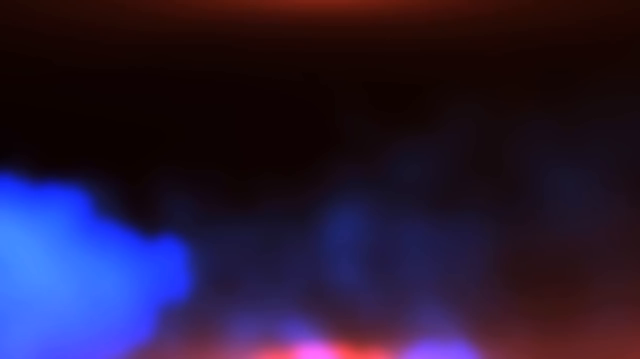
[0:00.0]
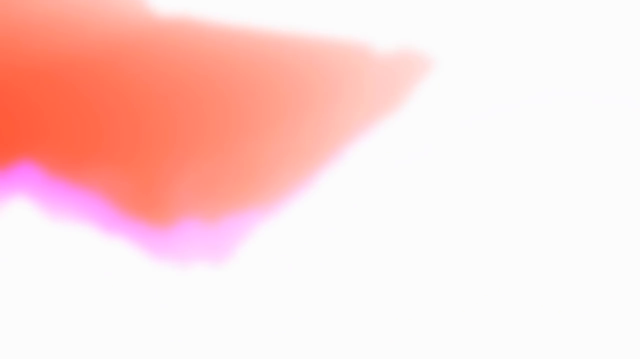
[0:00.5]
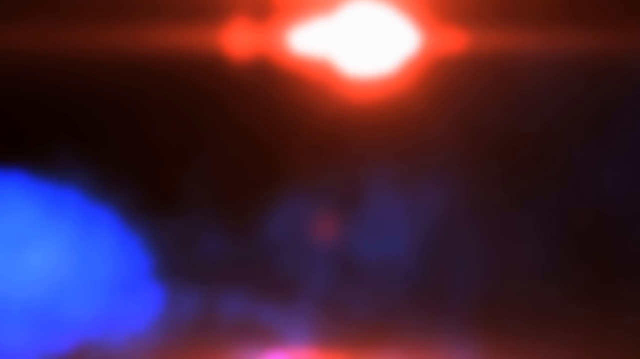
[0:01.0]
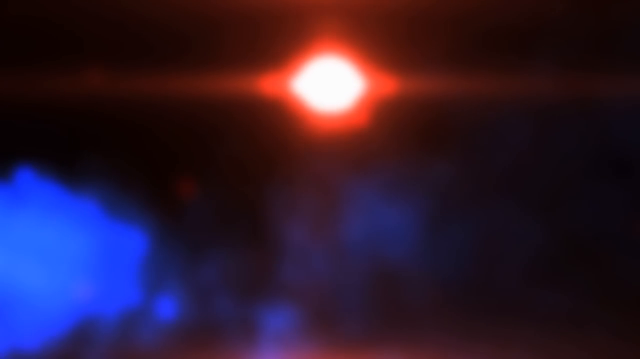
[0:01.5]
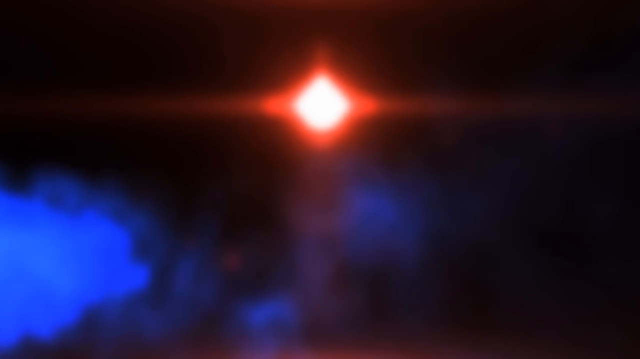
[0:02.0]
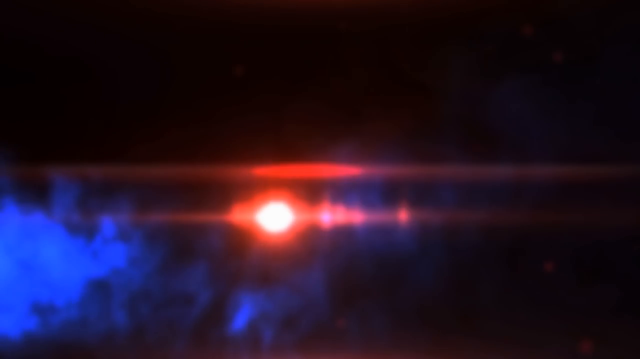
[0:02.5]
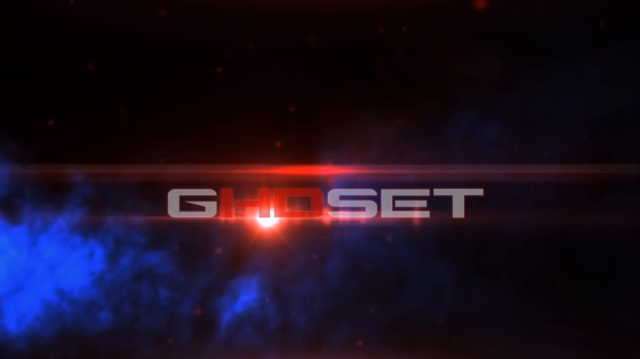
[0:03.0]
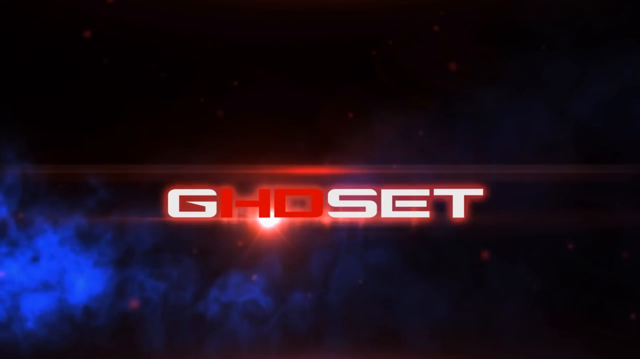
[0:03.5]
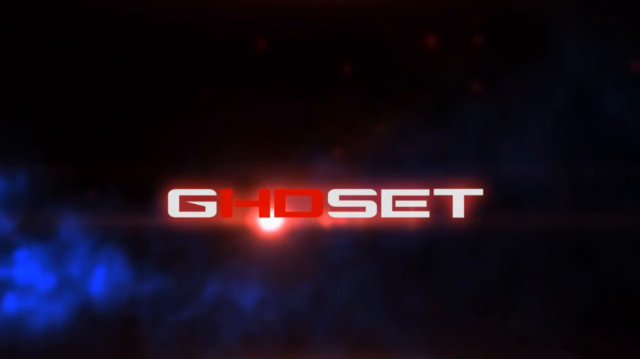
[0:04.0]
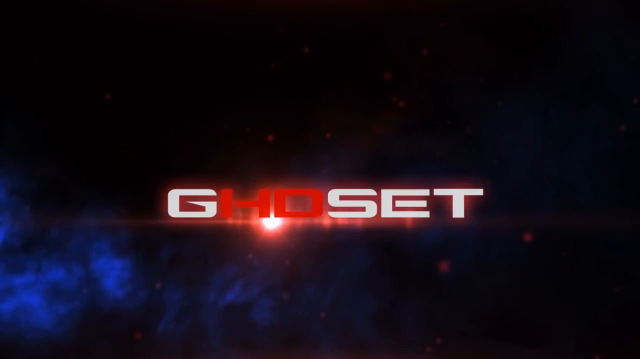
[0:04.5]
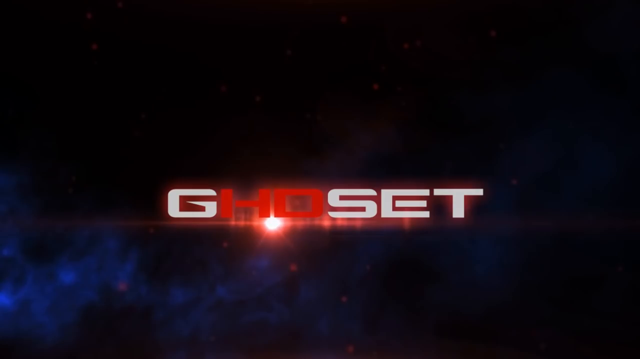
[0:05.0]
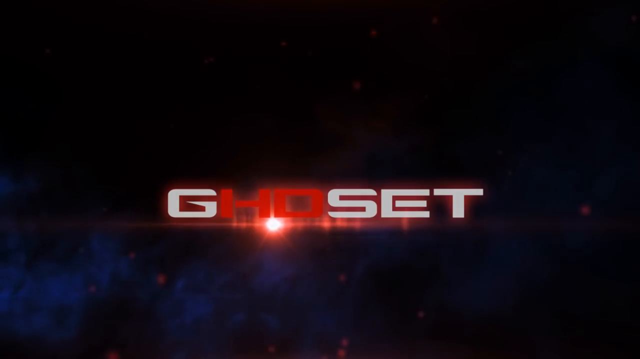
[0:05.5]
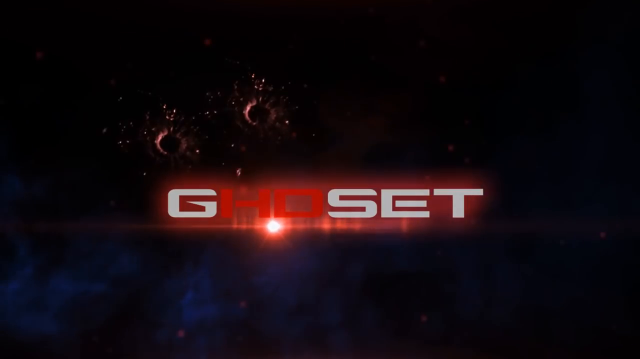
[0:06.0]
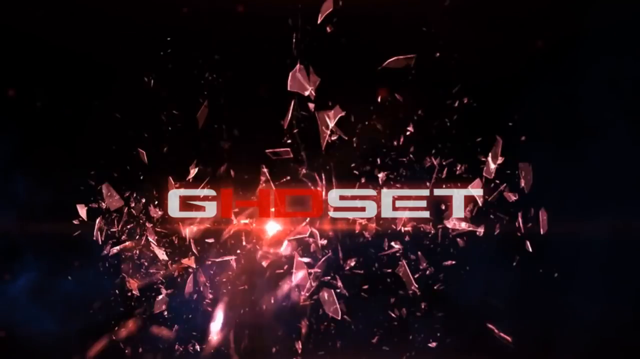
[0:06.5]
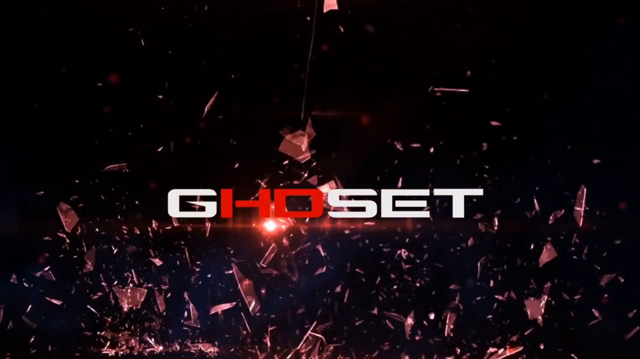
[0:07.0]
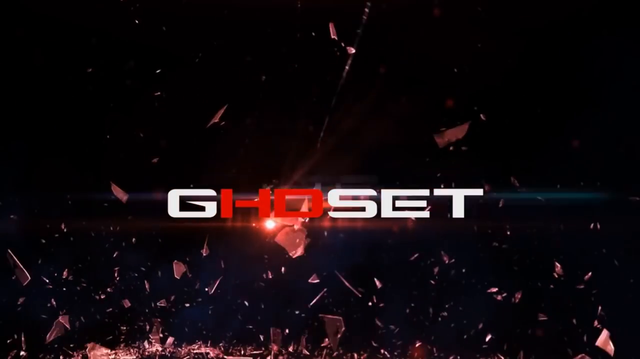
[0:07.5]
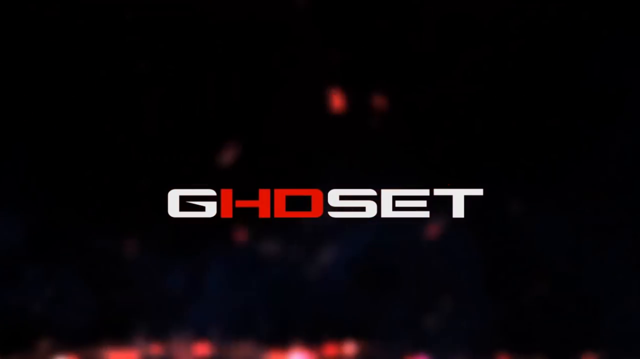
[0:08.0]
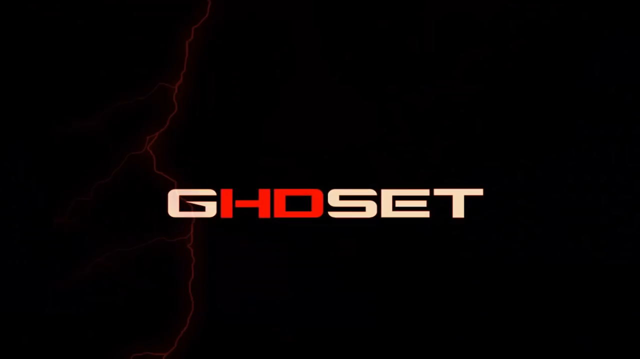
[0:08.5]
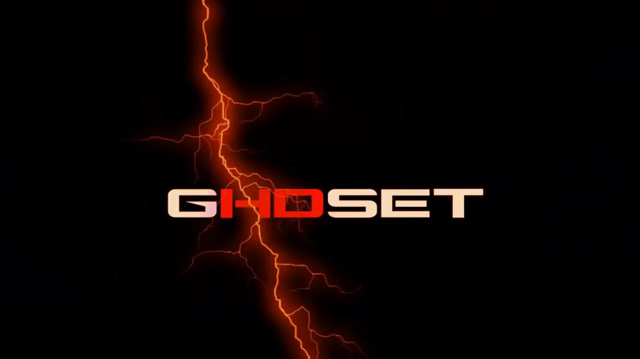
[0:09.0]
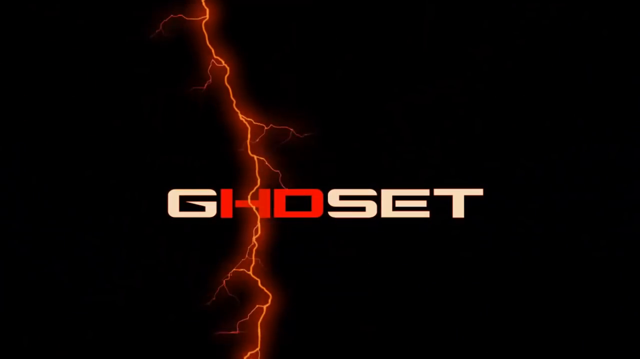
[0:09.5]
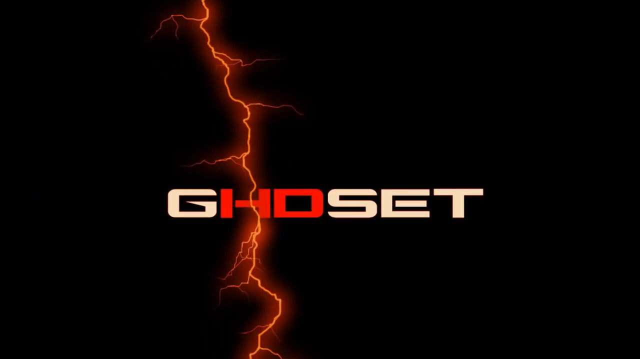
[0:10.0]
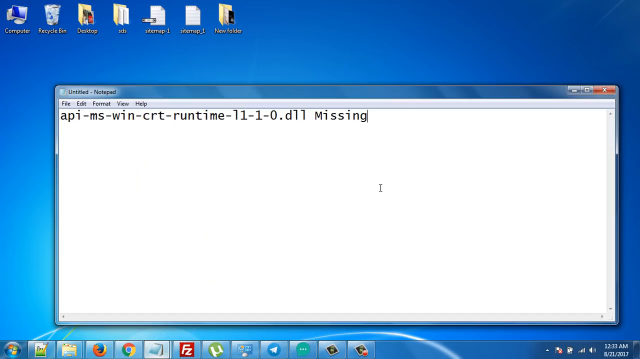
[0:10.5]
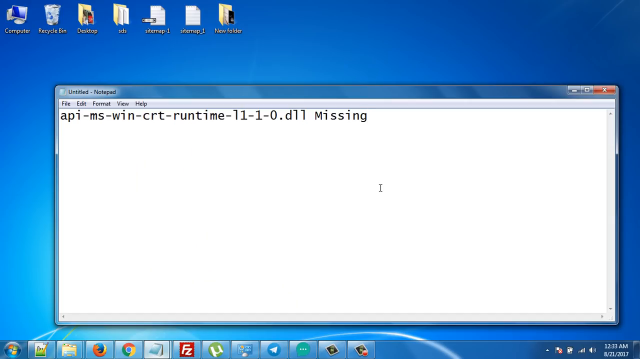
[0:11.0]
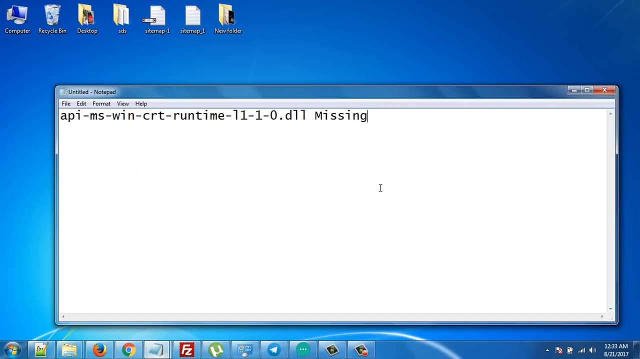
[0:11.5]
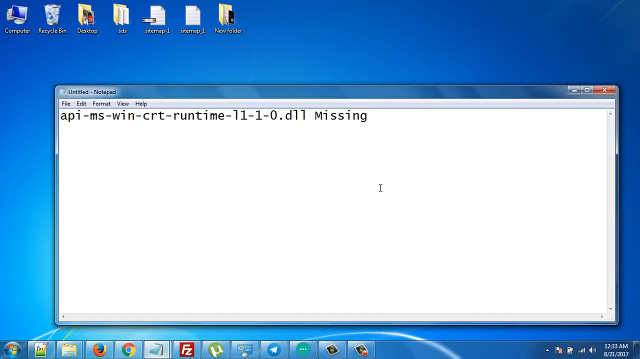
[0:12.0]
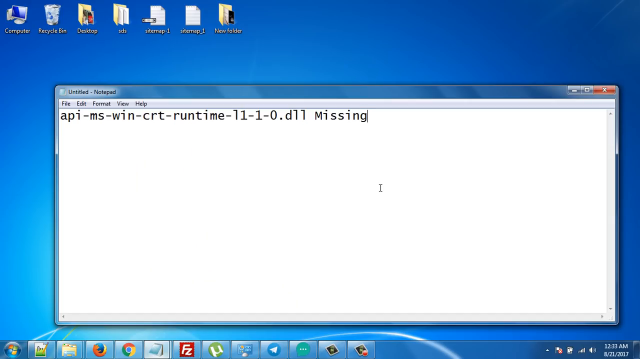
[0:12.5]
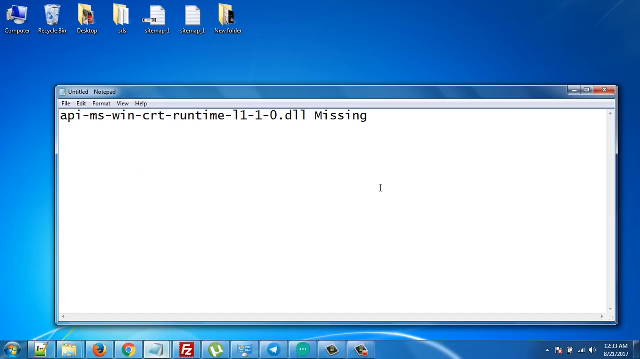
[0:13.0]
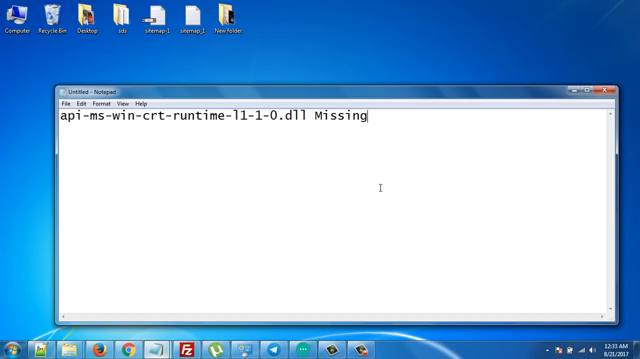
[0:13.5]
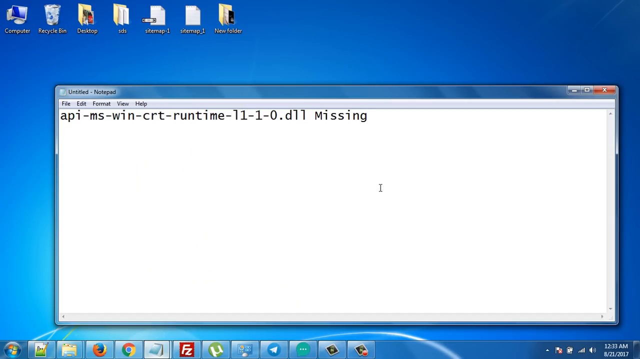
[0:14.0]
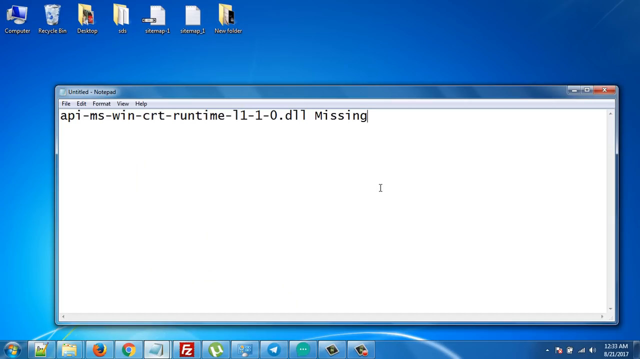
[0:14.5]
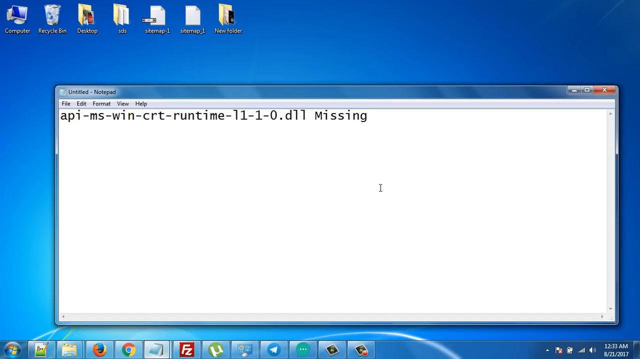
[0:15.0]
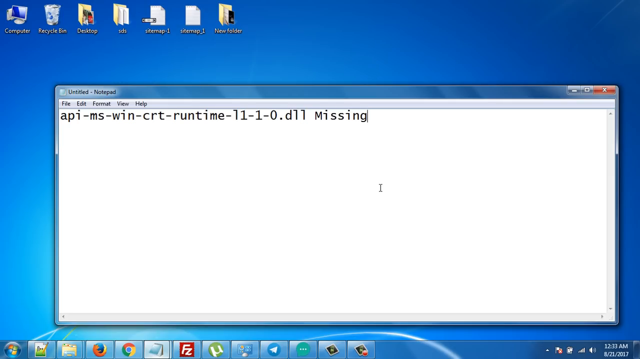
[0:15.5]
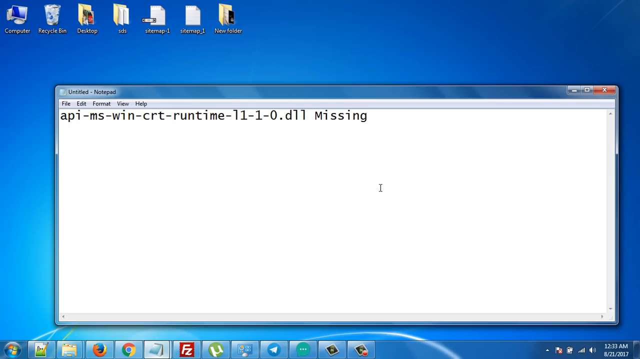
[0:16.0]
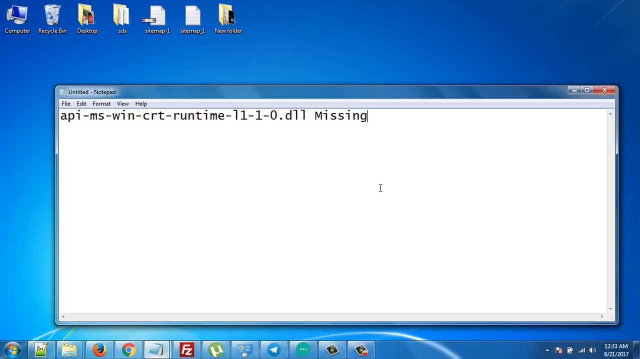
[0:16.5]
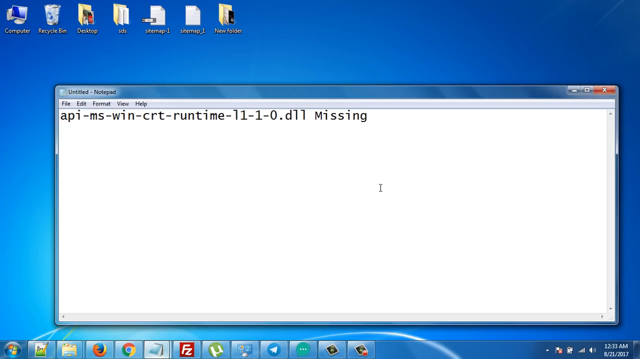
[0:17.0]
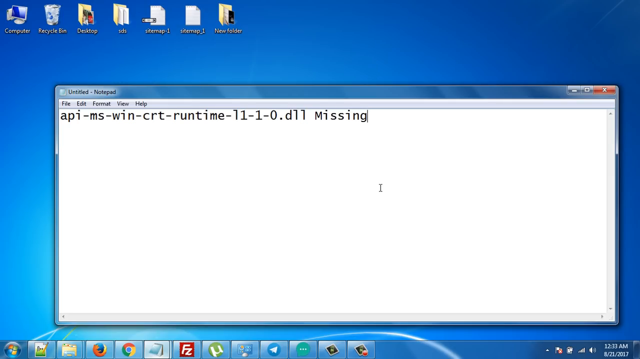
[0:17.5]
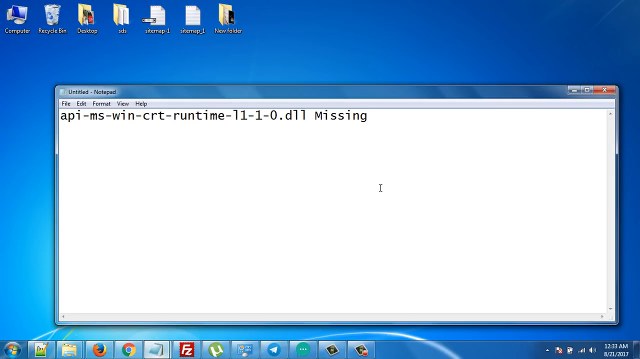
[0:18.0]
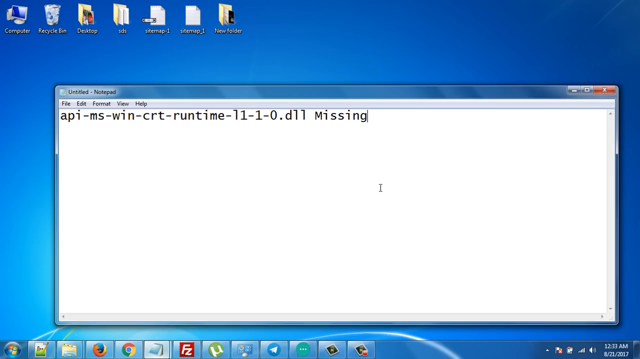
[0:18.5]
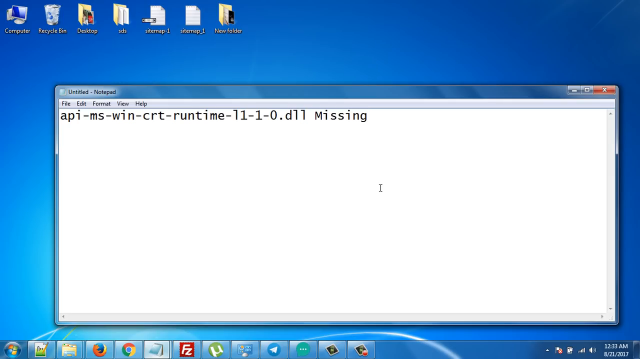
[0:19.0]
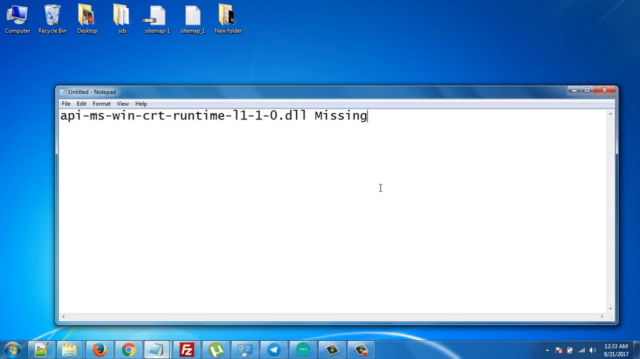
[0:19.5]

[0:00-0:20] A bright light kind of flashes on a mostly black screen, with a little blue in the lower left-hand portion. A bright red light comes back into a word that appears to read G-H-O-S-E-T, seemingly "ghosted," with the G in white, the H-O in red and the S-E-T in white. A flash of red lightning follows, and the view comes up to someone's desktop, which has desktop apps at the top, including computer, recycle bin and desktop. On a white backdrop like a computer screen, the text "API-MS-WIN-CRT-RUNTIME-11-1-0.D11 missing" appears.